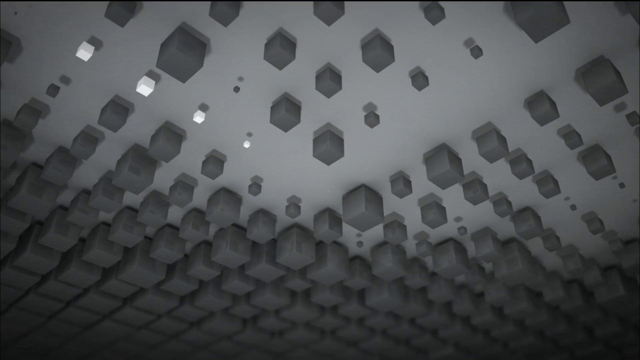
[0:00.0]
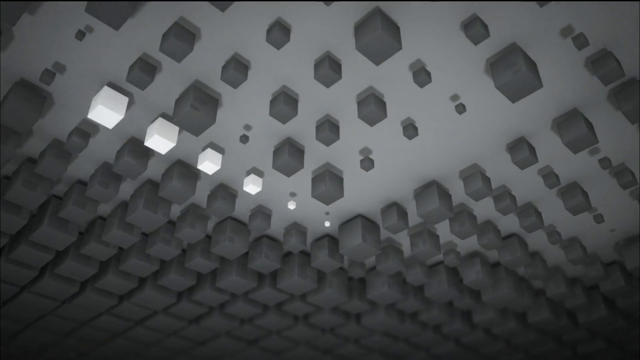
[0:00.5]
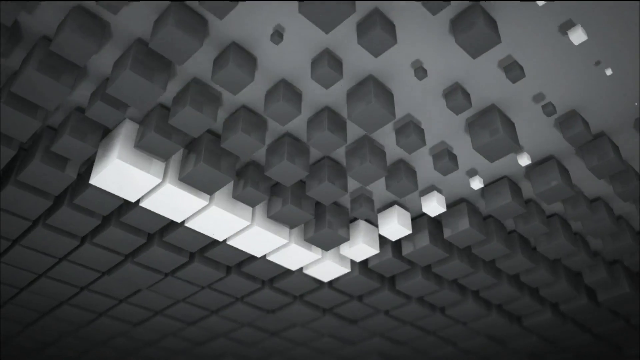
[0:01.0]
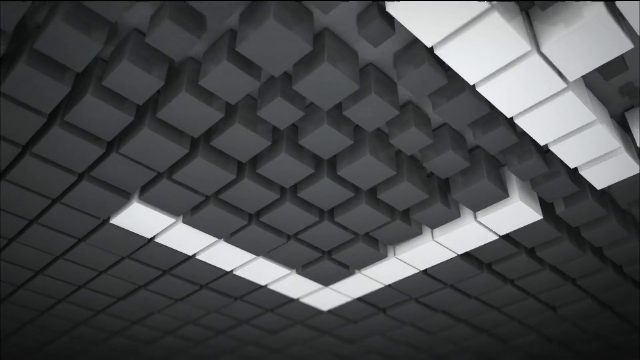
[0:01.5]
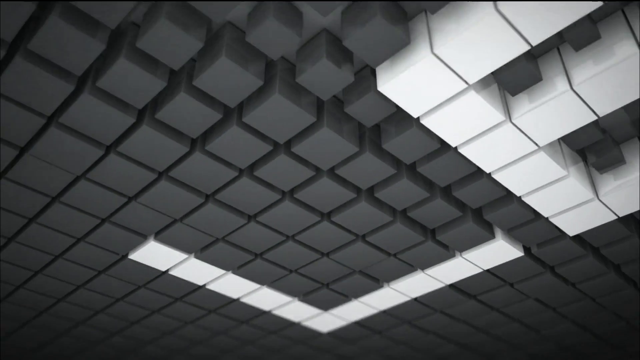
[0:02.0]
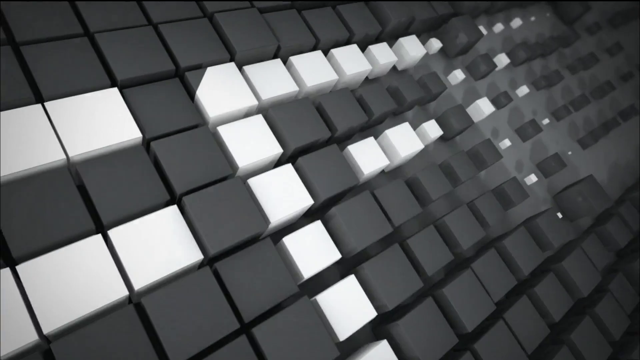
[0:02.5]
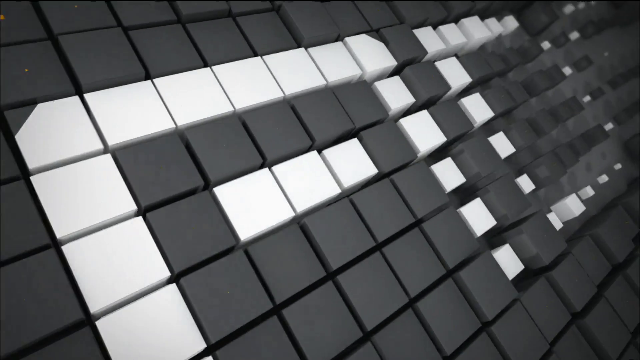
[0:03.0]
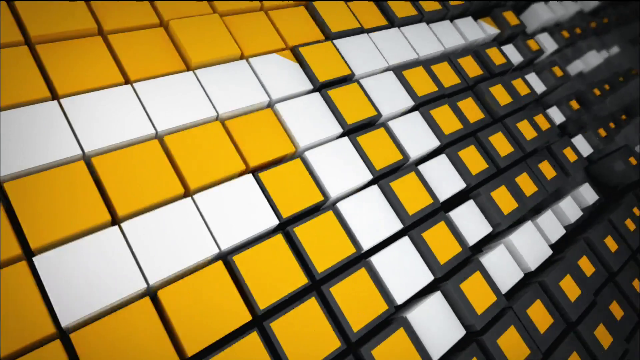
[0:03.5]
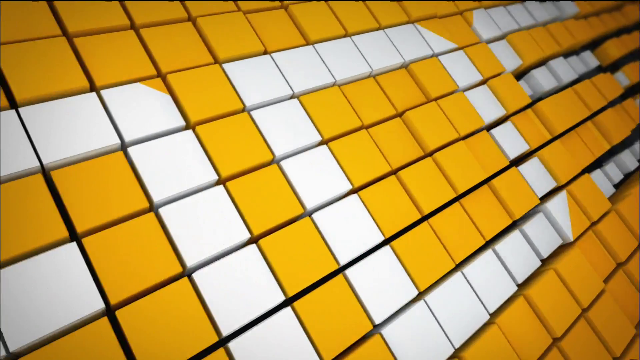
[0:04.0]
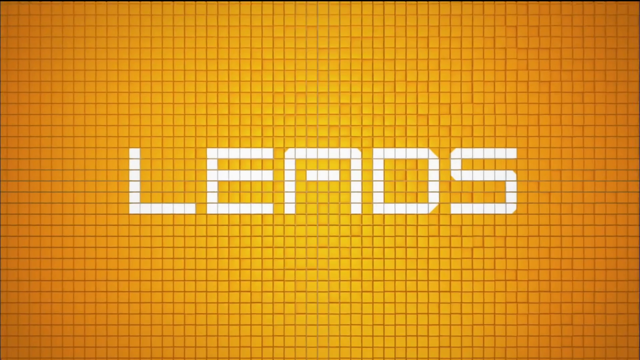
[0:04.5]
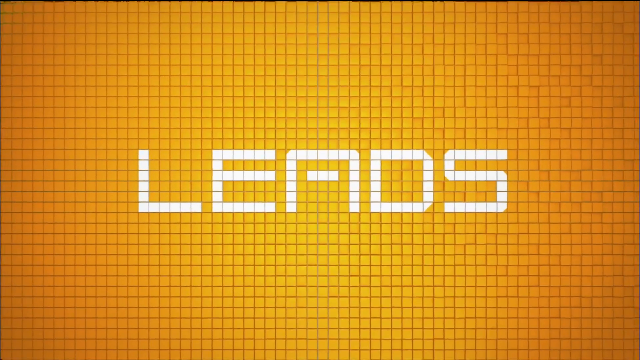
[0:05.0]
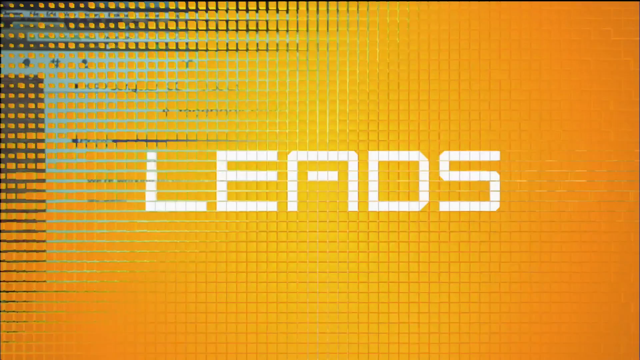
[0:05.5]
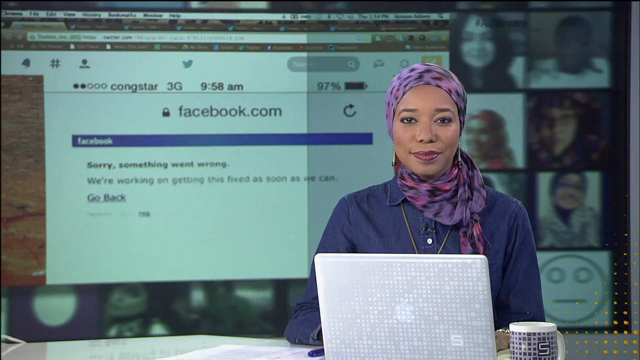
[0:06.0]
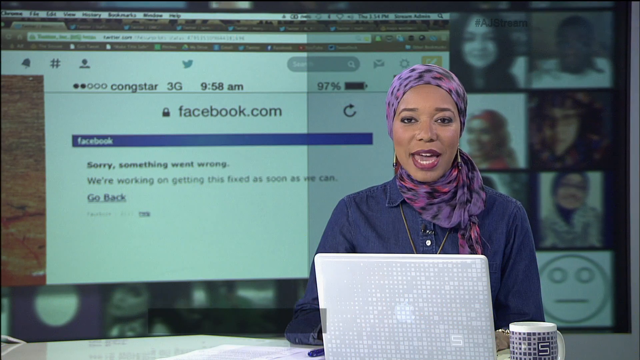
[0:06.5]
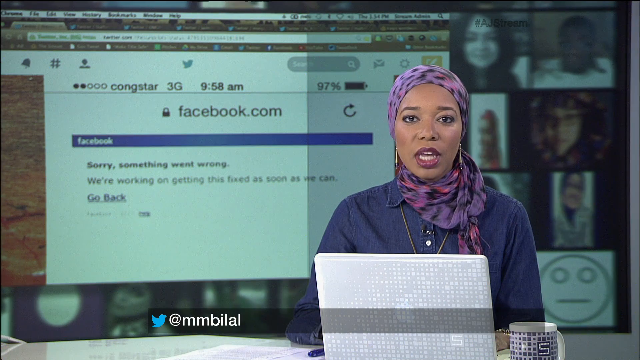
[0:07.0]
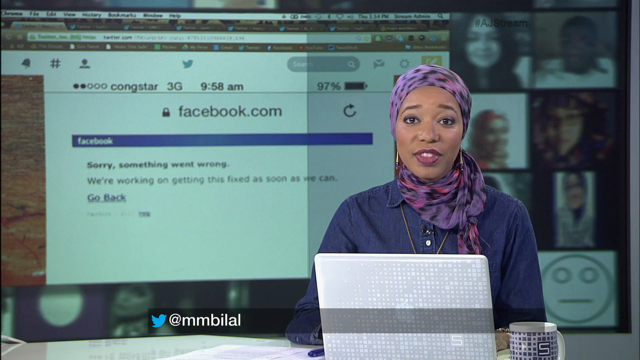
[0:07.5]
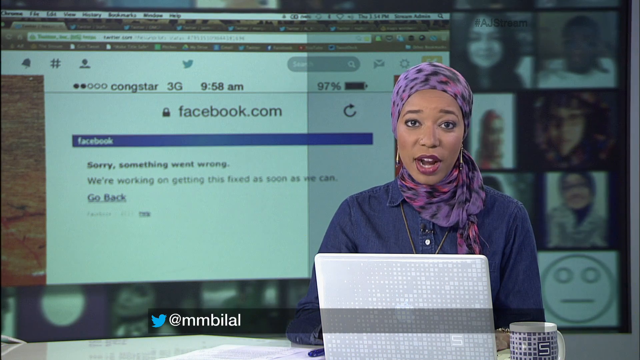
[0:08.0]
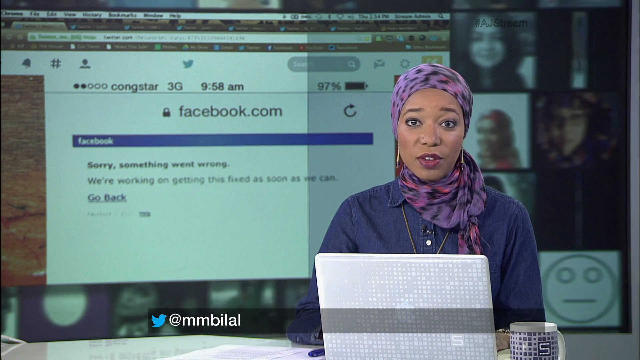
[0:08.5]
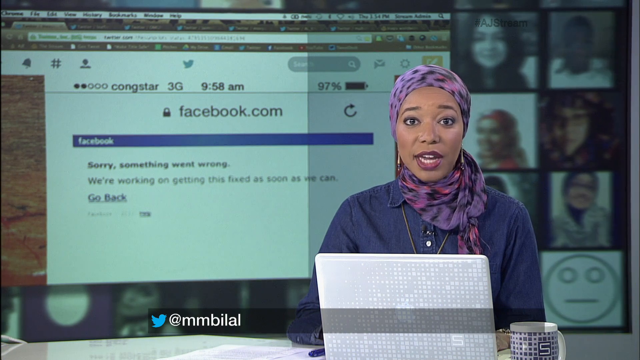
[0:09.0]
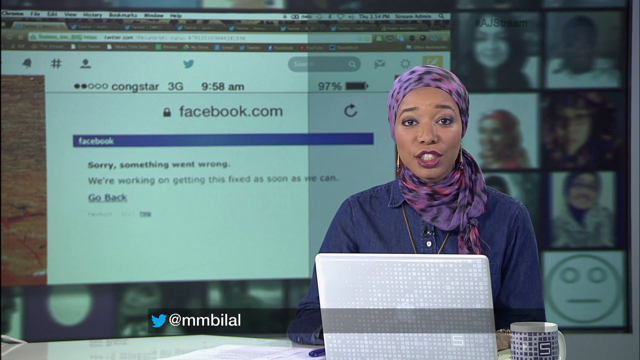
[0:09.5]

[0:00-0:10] The video opens on what looks to be a light gray ceiling with dark gray cubes stuck to it; the closer the cubes get to the screen, the fewer there are, and then a few small white cubes mix into the bunch as they get close to the screen. The scene changes, and as it goes on the cubes start to grow and swell, filling in the gaps among each other and turning yellow and white until the whole screen is yellow and the white ones form the letters "L E A D S" across the screen. Next comes a somewhat fuzzy background image that says "facebook.com", with a woman reporter on the right side of the screen. She wears a purple and black bandana, a gold chain and a denim shirt, and her laptop is open. She looks straight at the camera and never once looks down at the laptop while she is talking.